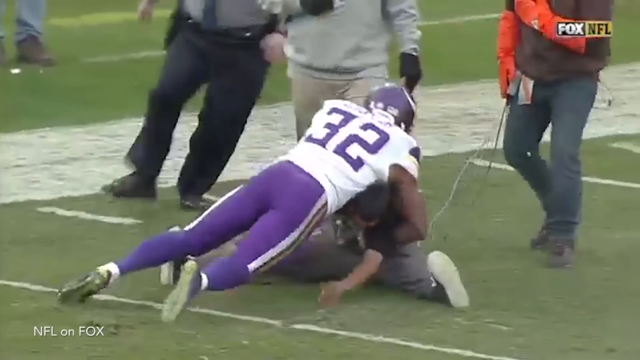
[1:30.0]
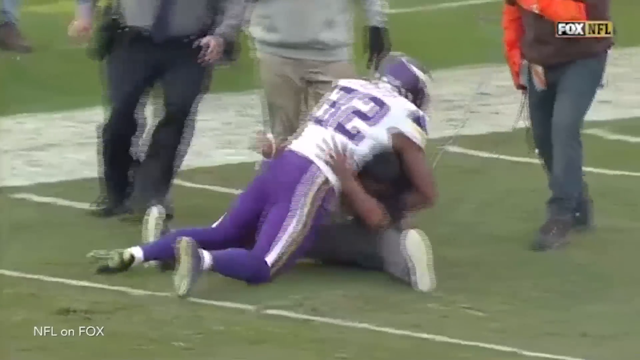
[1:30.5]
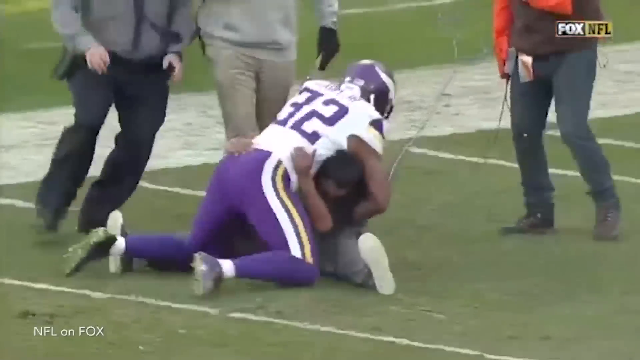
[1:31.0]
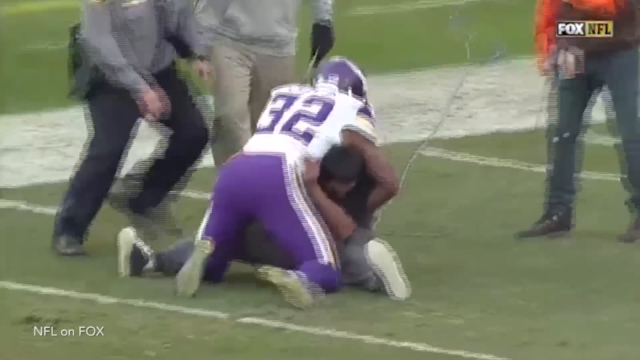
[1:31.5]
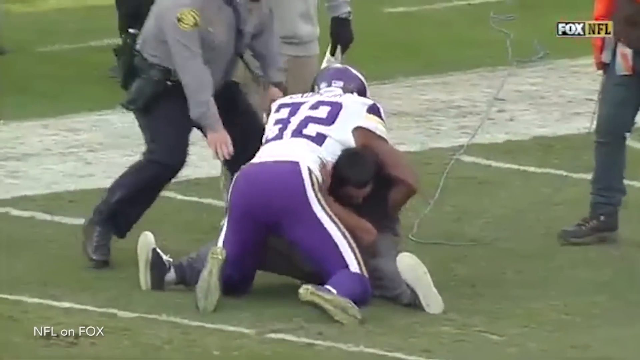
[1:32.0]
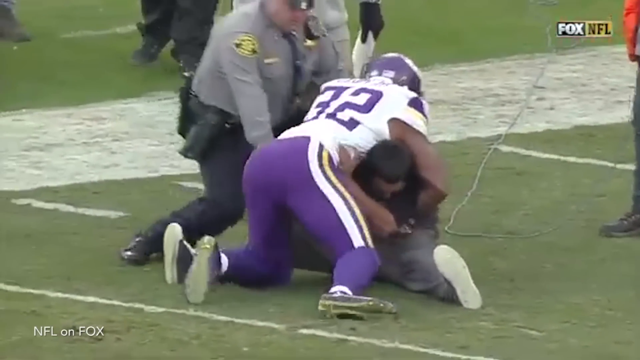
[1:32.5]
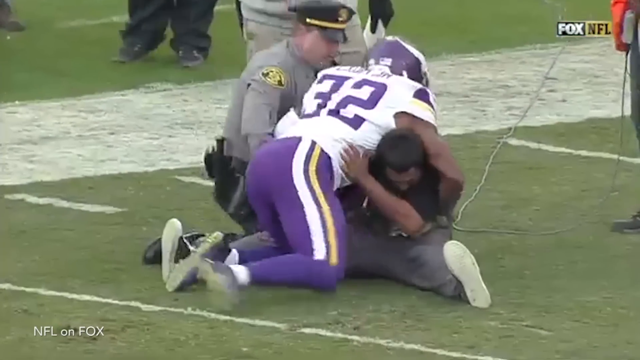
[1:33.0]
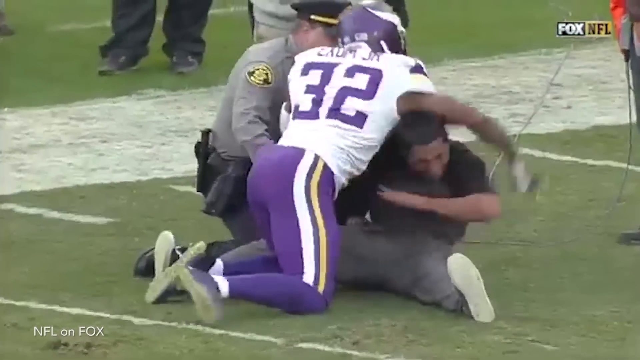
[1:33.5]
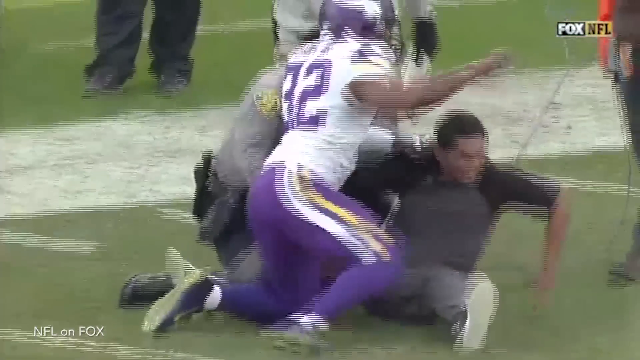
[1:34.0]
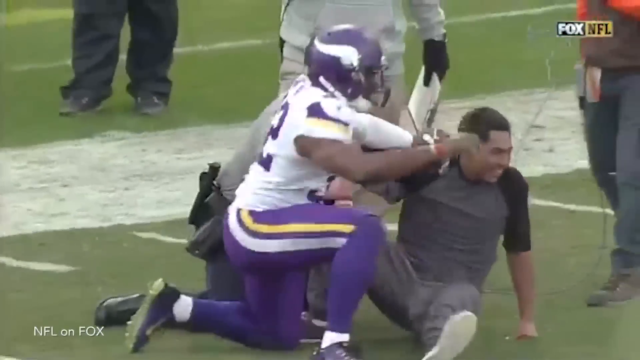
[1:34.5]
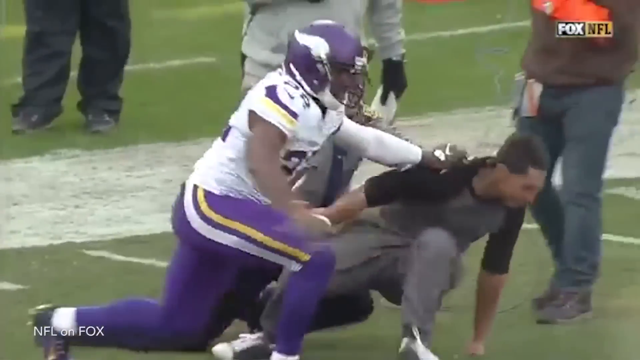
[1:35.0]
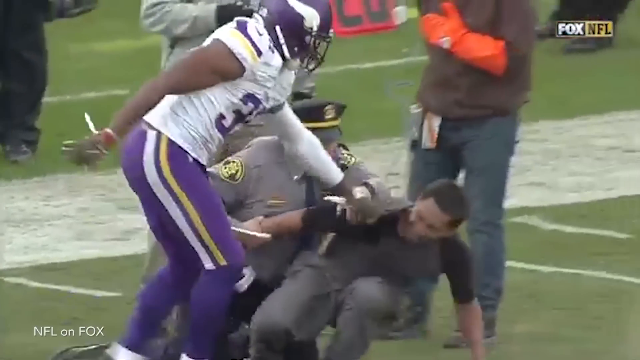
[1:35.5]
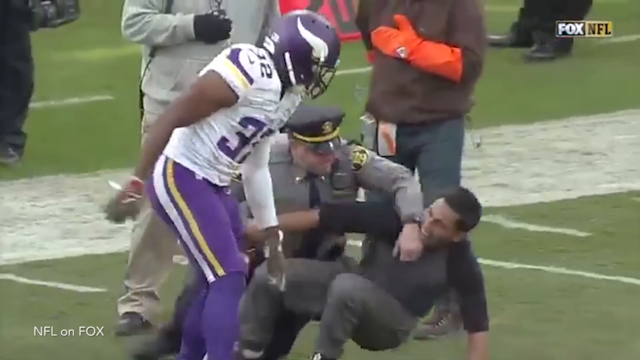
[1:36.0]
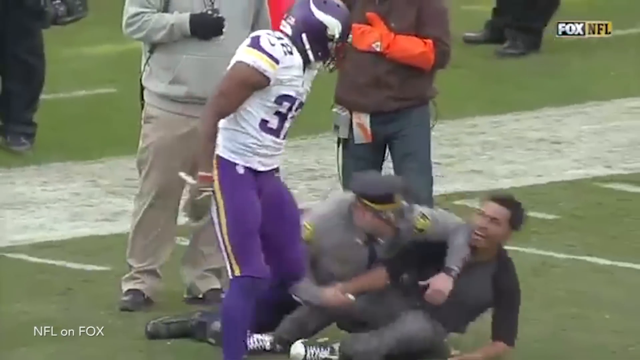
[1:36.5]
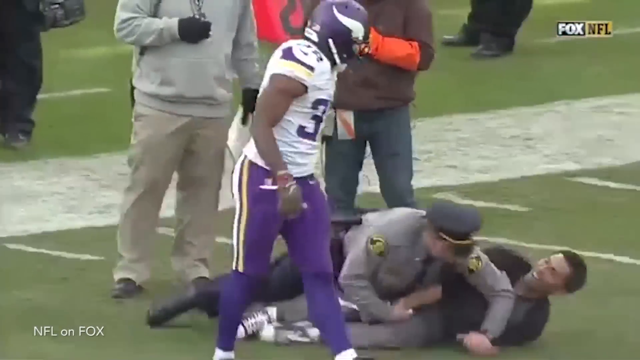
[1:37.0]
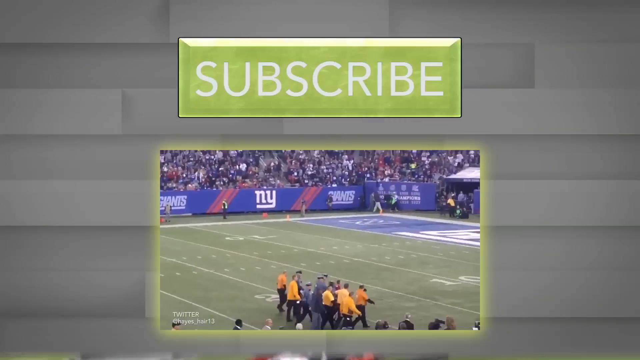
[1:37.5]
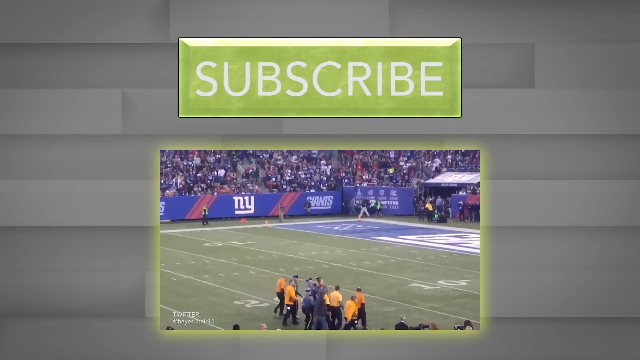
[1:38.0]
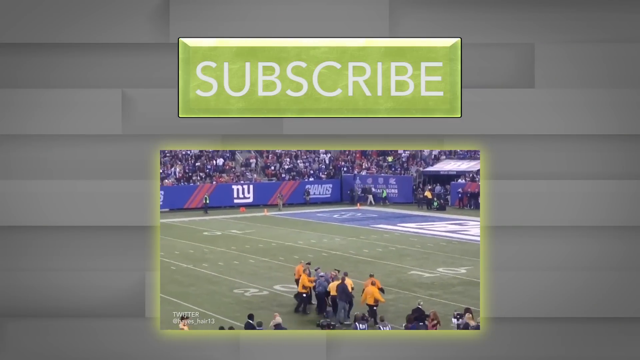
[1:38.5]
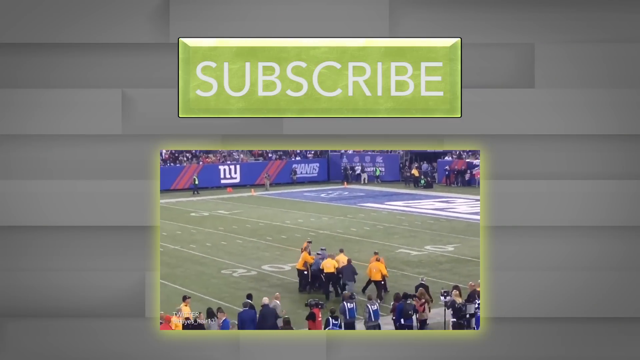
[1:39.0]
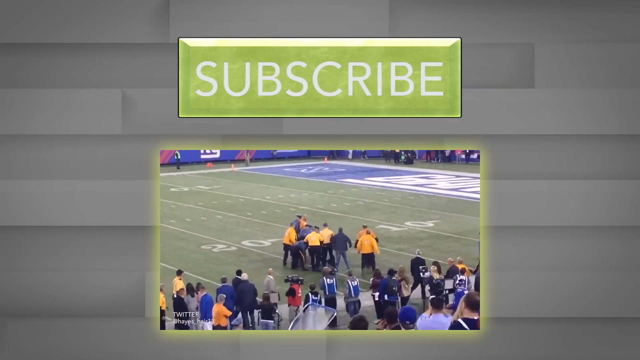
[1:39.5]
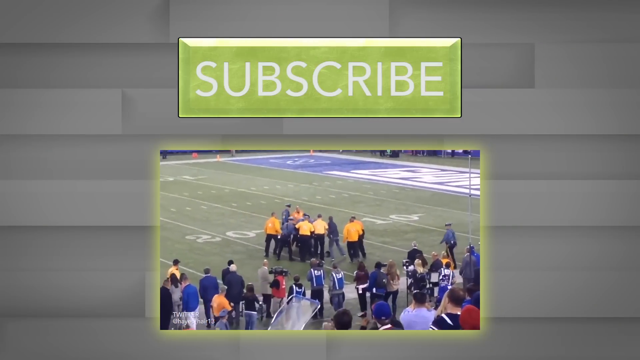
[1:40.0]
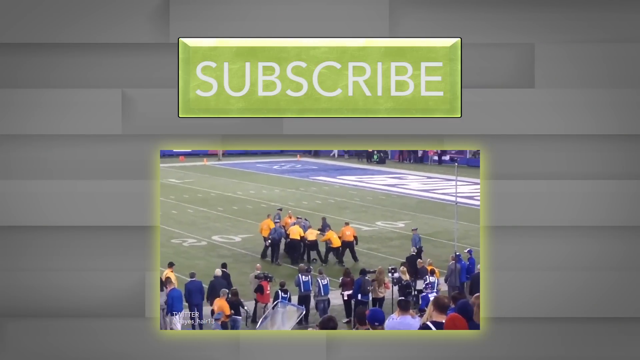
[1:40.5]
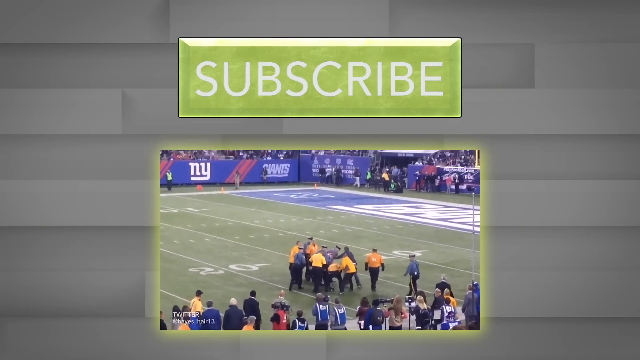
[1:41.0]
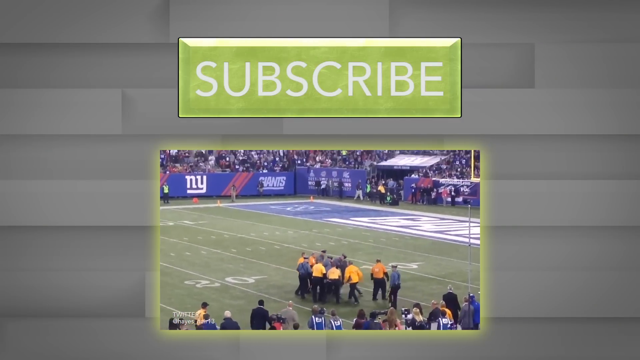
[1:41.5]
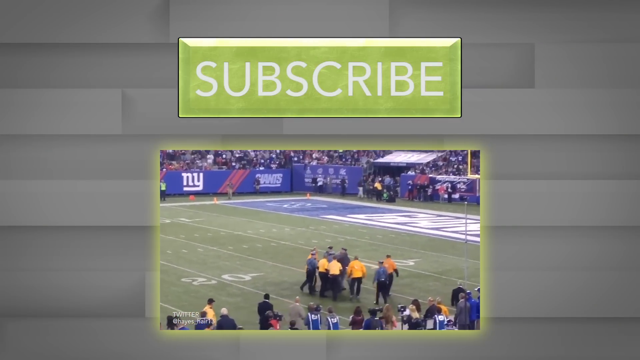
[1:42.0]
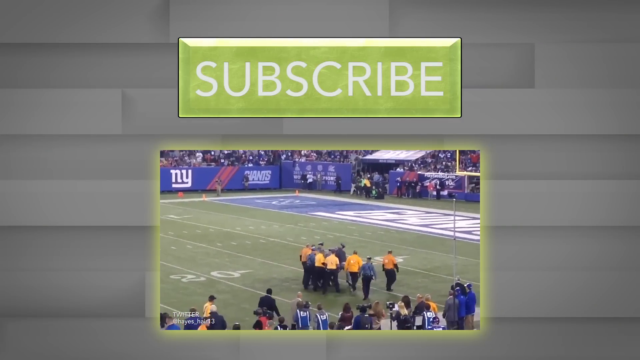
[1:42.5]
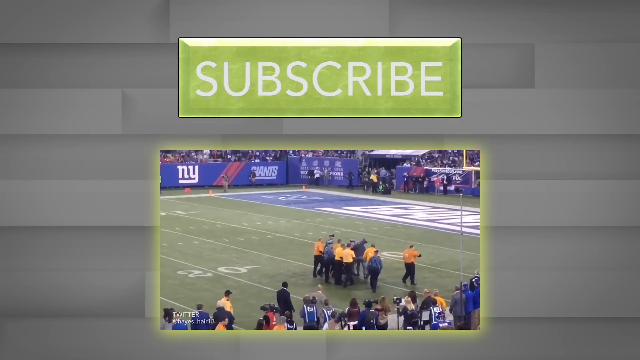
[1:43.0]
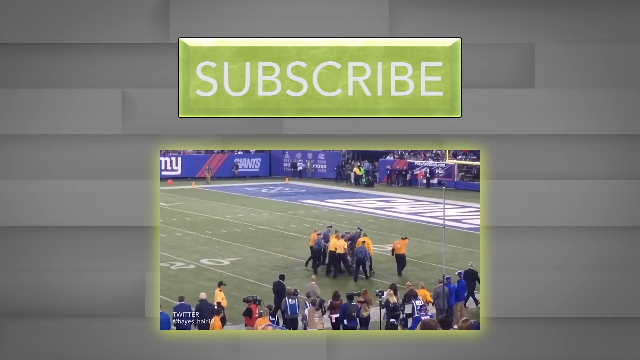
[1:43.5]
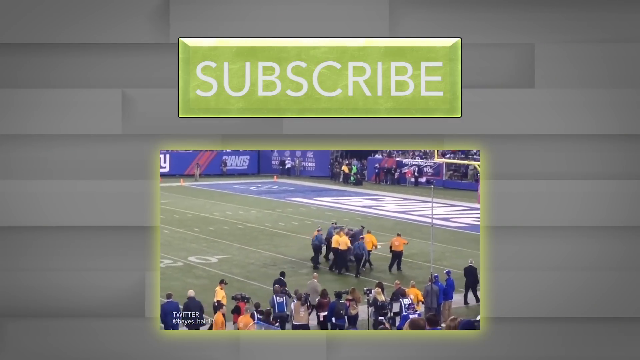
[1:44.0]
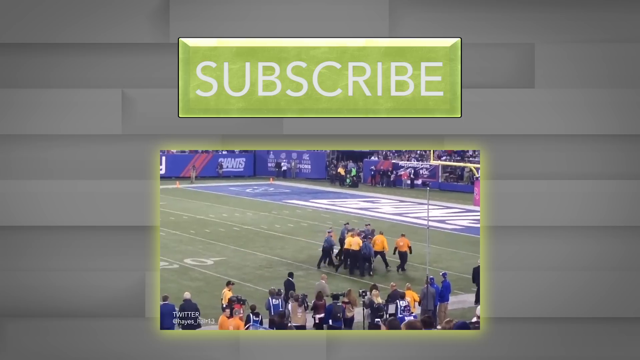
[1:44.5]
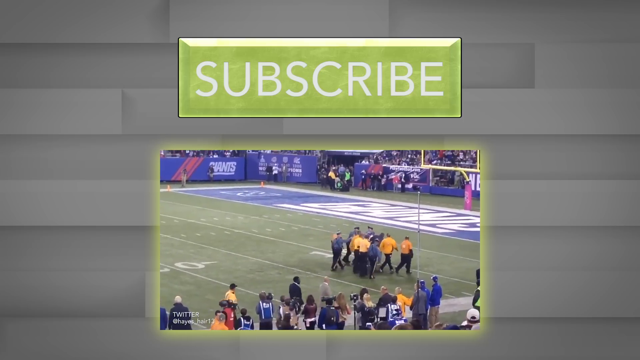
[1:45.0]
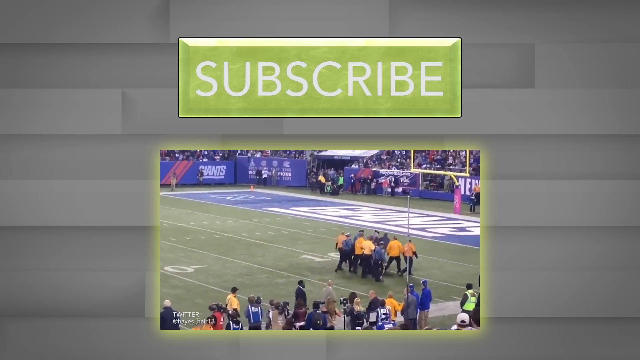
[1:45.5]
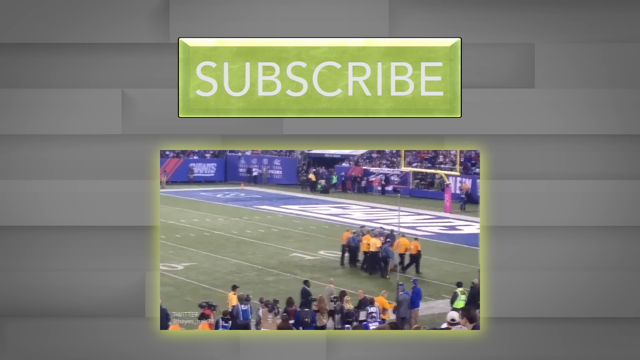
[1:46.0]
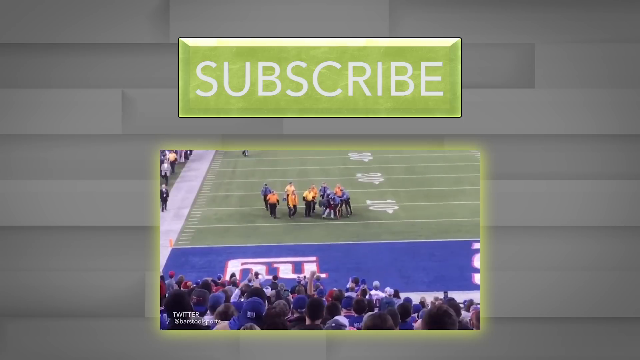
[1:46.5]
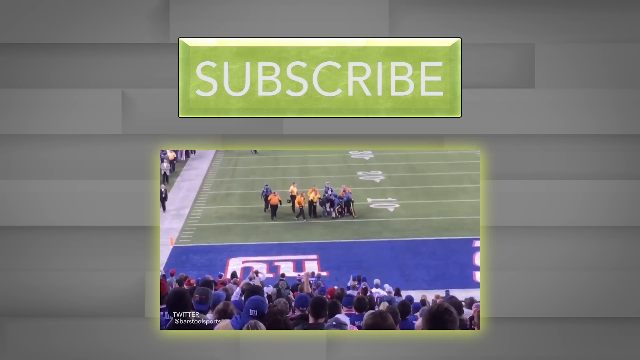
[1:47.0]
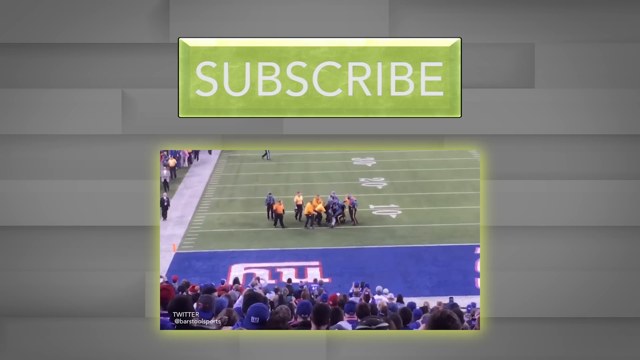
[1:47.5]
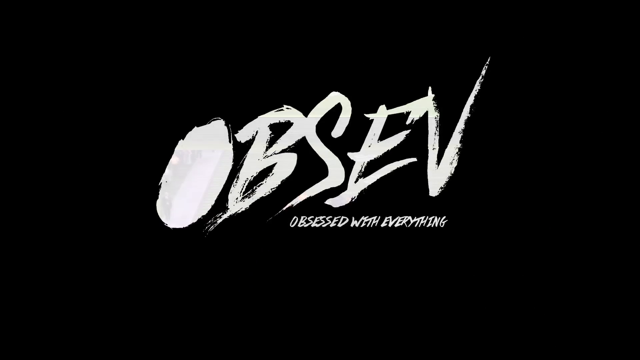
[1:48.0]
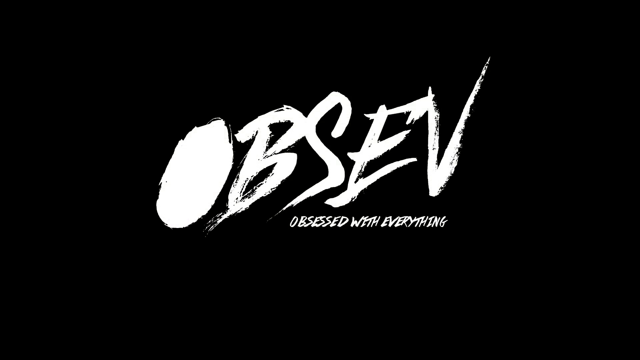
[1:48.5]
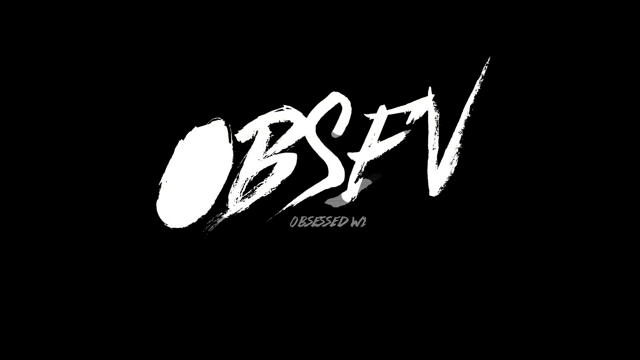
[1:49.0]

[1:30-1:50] Vikings number 32 tackles a man who is not in uniform; he seems not to belong there, as staff are all around them. The man is taken to the ground, and once the player gets off him, he gets up smiling; he is probably a super fan who jumped onto the field. Next, a smaller video appears on a gray background with a big green subscribe button on top. In it, a large number of staff escort someone off the field, apparently the fan, in gray pants and a gray shirt. There are men in yellow or orange jackets and men who look like police officers, with hats, blue uniforms and black pants, all in a big circle escorting the person off the field. The fans in the stadium are in their seats all around, cheering and jeering, and media with cameras line the sidelines, watching.